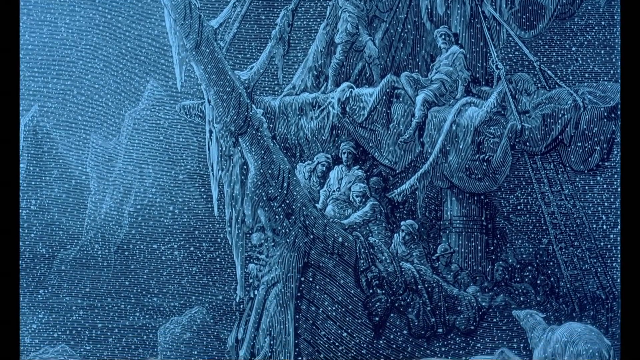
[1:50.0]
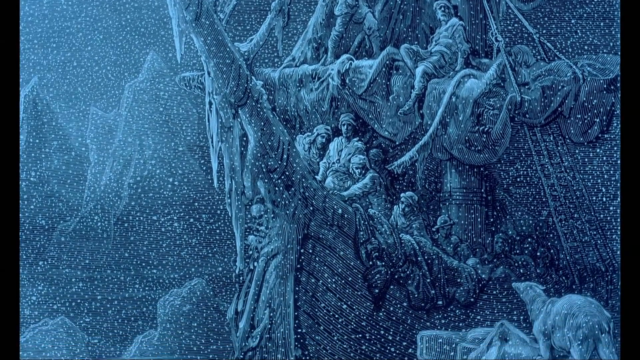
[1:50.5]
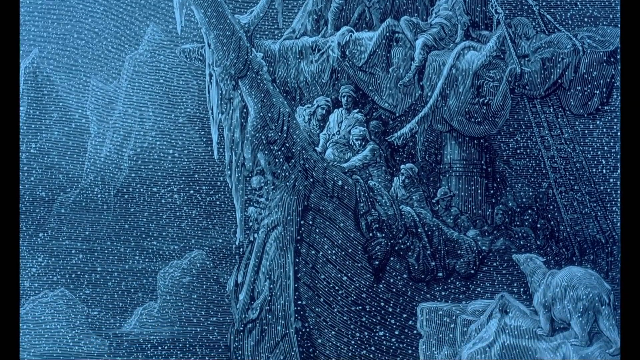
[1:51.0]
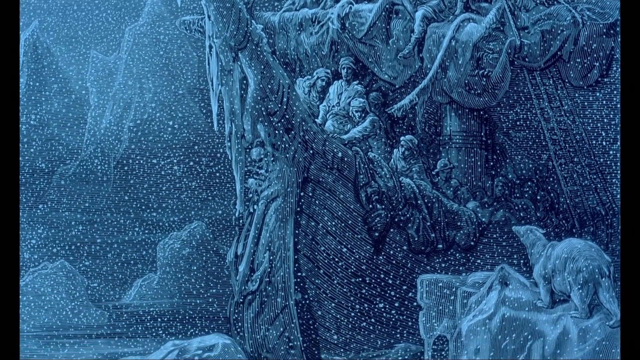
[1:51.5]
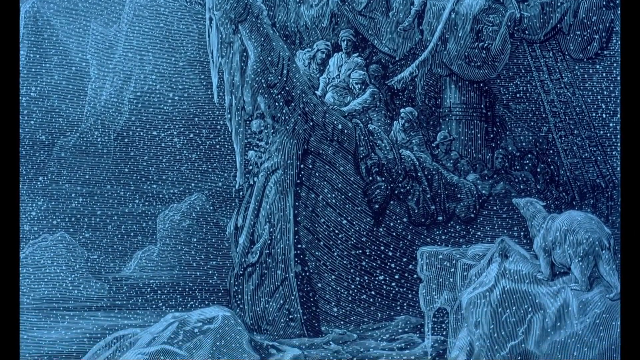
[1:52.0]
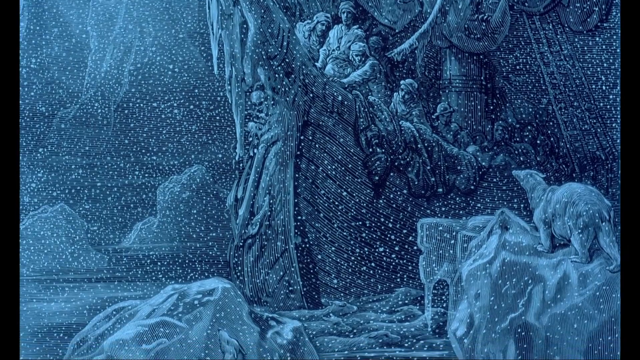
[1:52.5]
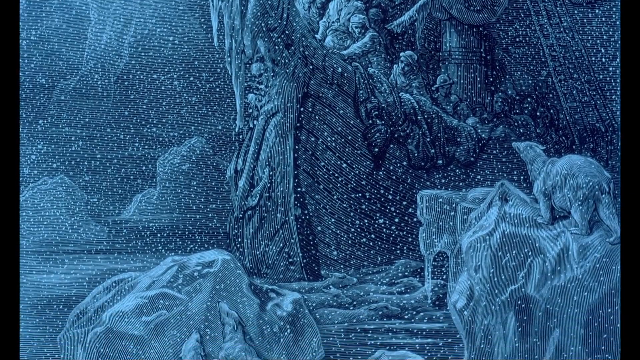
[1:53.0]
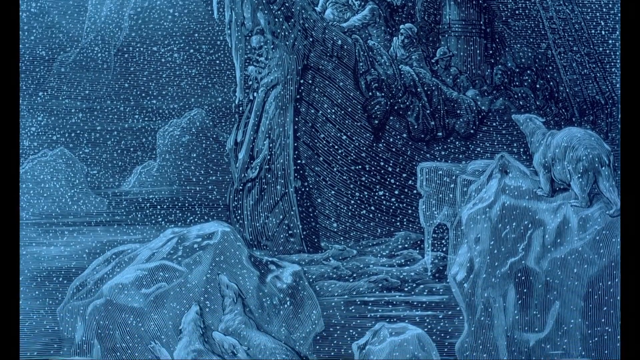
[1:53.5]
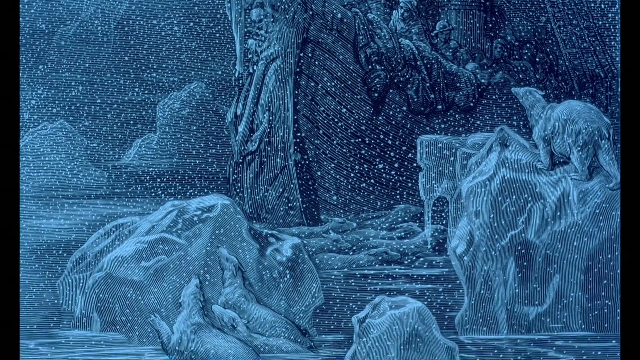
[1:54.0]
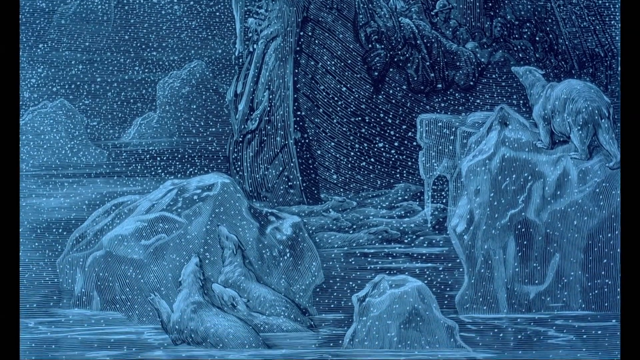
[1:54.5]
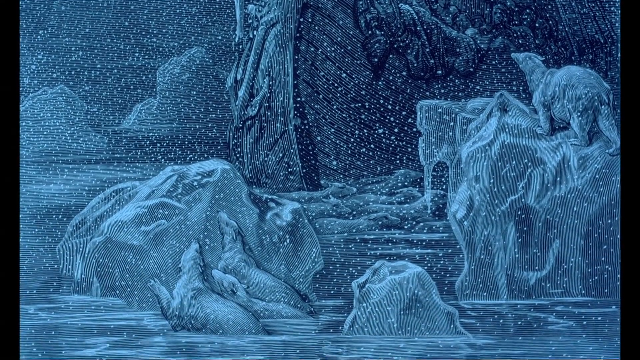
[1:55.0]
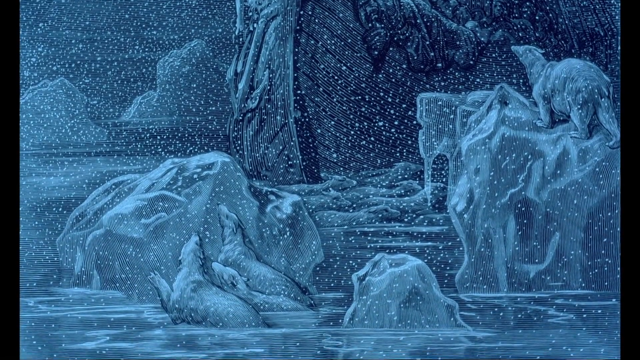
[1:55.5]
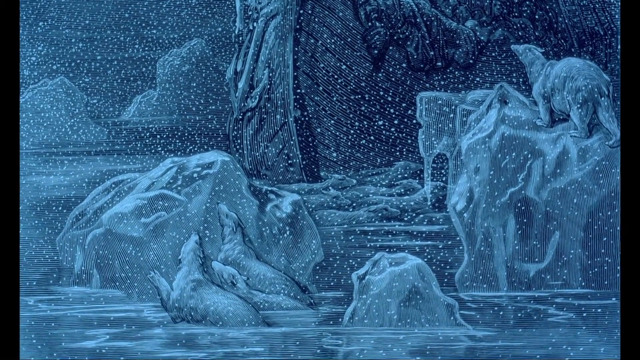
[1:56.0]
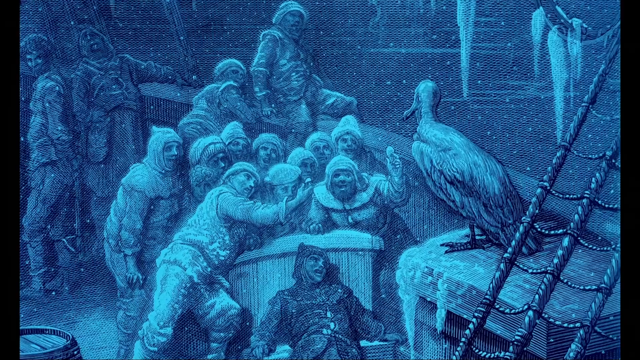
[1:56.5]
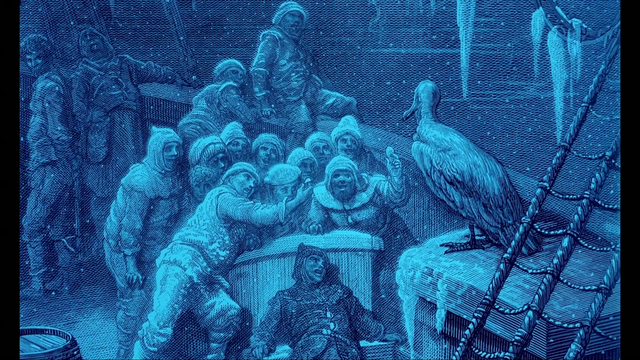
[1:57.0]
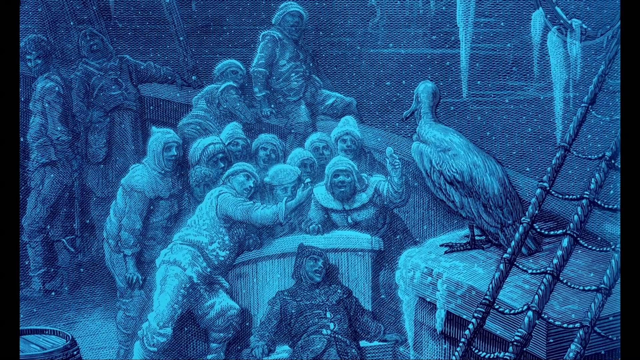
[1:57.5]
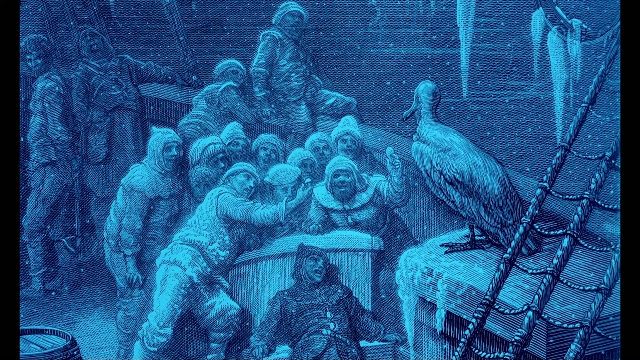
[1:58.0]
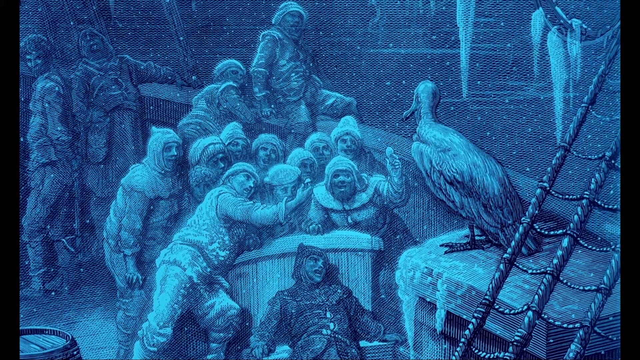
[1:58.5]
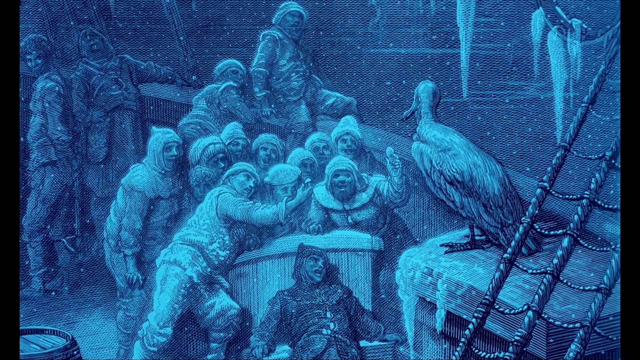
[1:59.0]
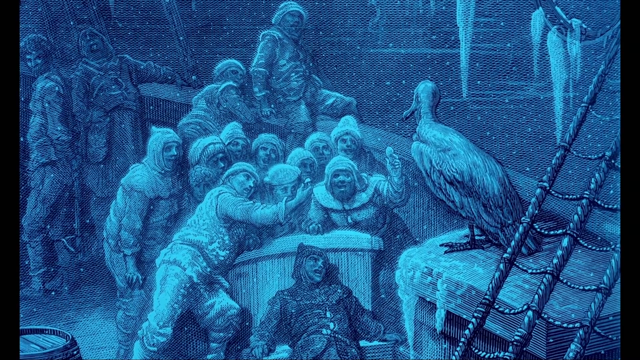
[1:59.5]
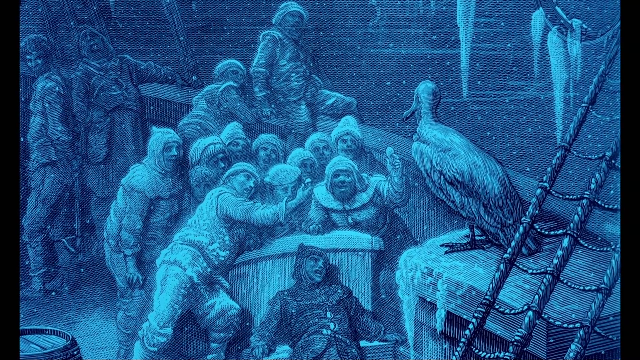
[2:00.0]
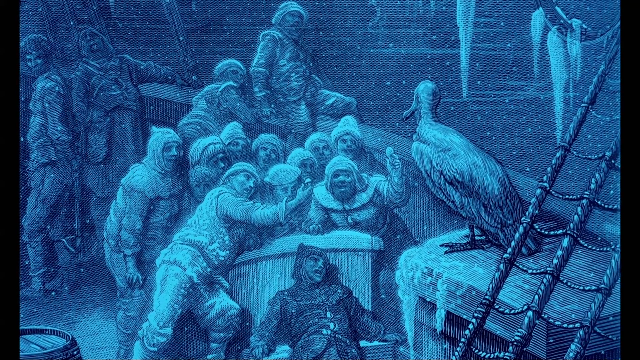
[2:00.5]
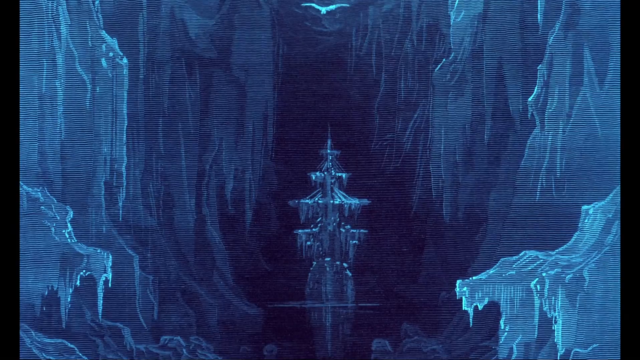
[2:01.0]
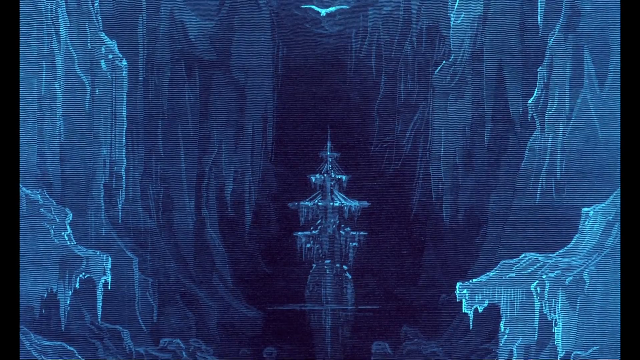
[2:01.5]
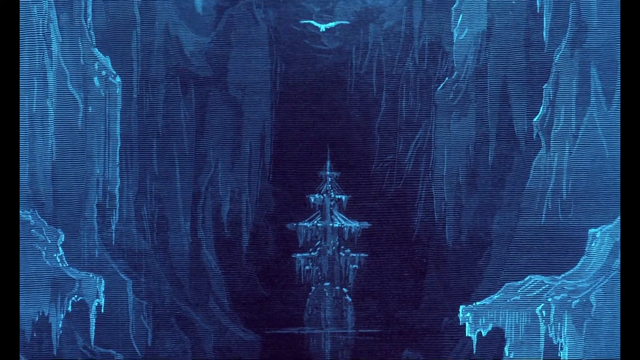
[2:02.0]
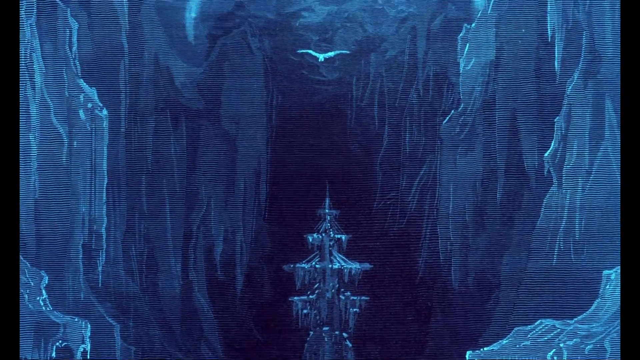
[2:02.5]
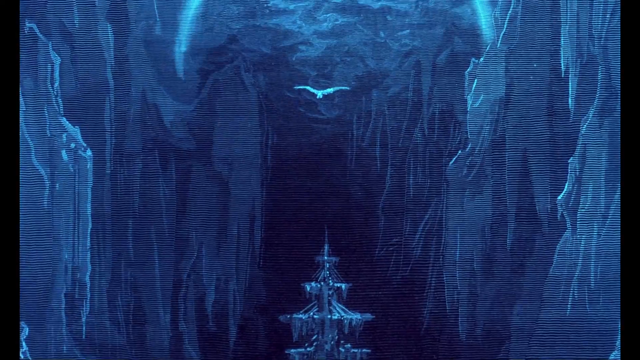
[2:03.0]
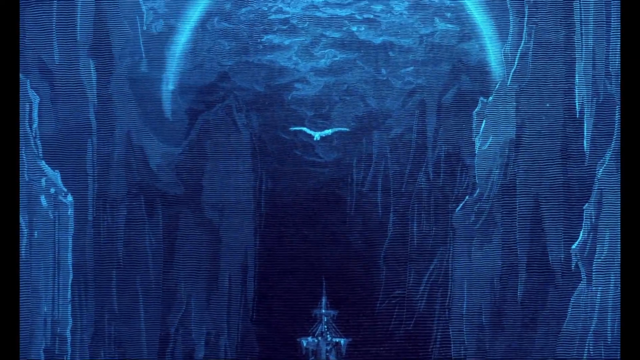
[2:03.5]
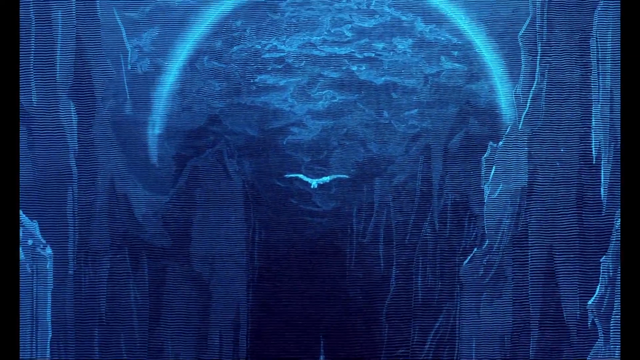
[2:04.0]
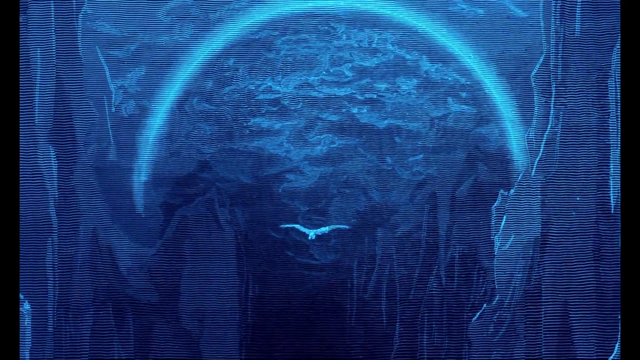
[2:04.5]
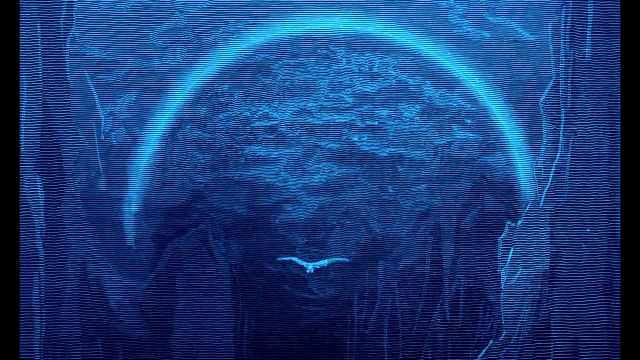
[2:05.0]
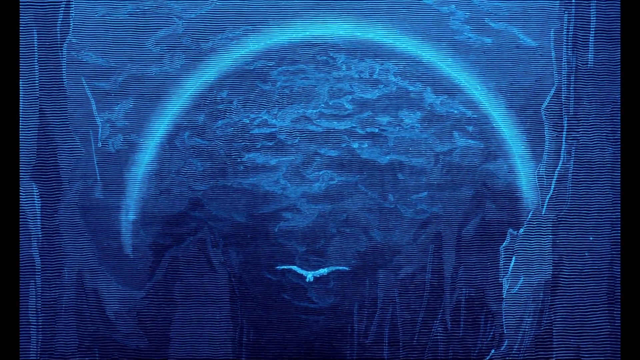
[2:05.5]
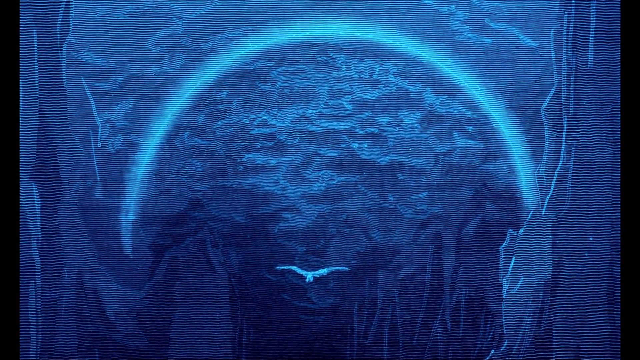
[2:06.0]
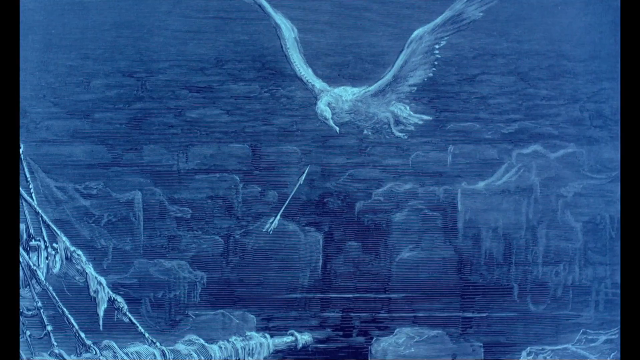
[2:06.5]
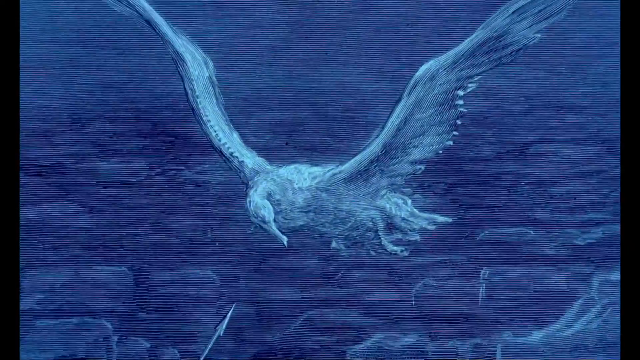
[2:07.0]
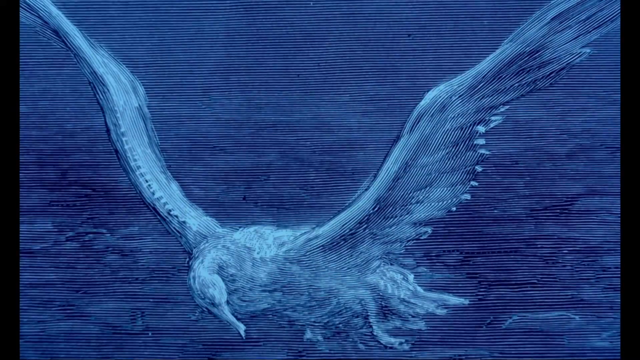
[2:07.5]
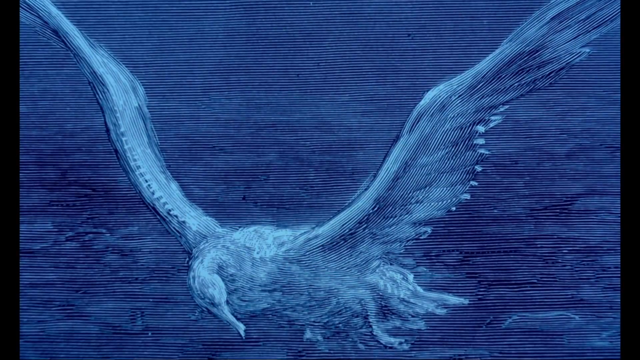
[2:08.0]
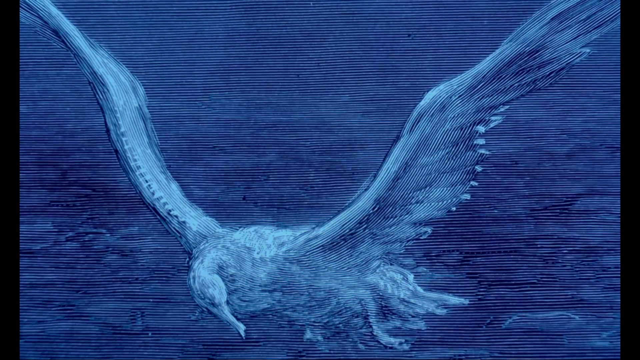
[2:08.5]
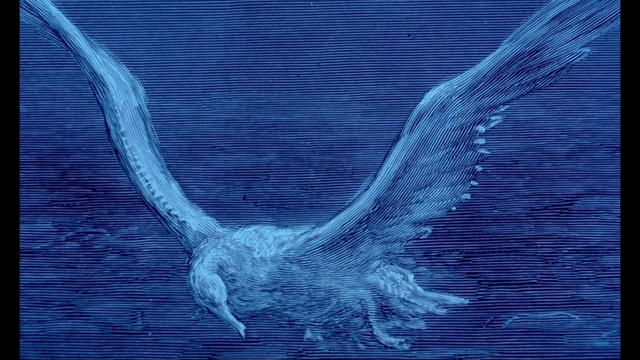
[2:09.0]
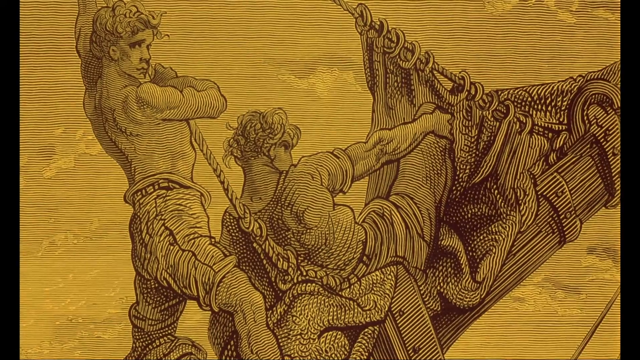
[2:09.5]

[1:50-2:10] The blue and white painting shows many men standing on a ship with icicles hanging off it, and snowflakes. The camera continues to pan down, revealing more of the painting, including icebergs and an animal, which appears to be a polar bear, walking across the iceberg on the right-hand side. On the left-hand side are three more polar bears swimming beside an iceberg, looking as though they are ready to climb onto it. The scene transitions to a blue painting of the deck of a ship, with snow and icicles hanging off the ropes. Many men stand on the left-hand side, and on the right-hand side stands a bird, possibly a pelican, which the men look towards.